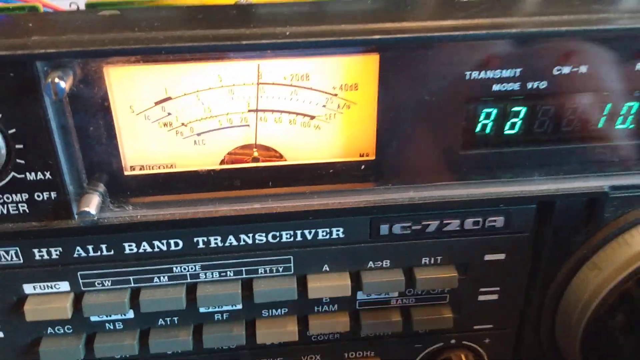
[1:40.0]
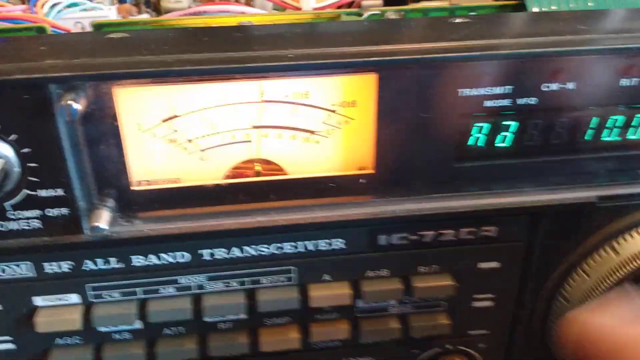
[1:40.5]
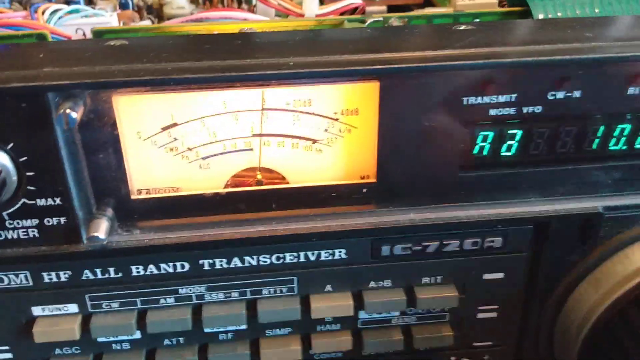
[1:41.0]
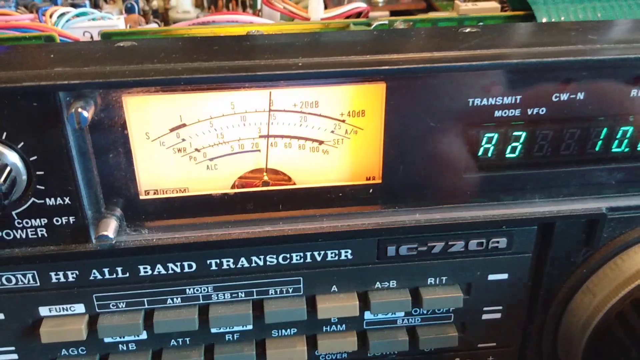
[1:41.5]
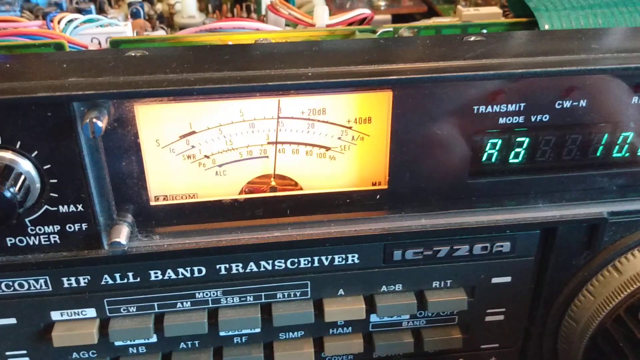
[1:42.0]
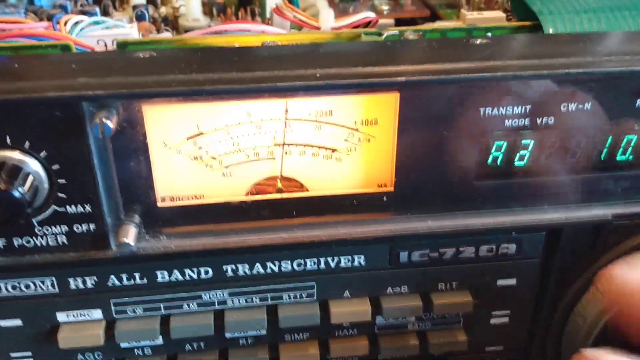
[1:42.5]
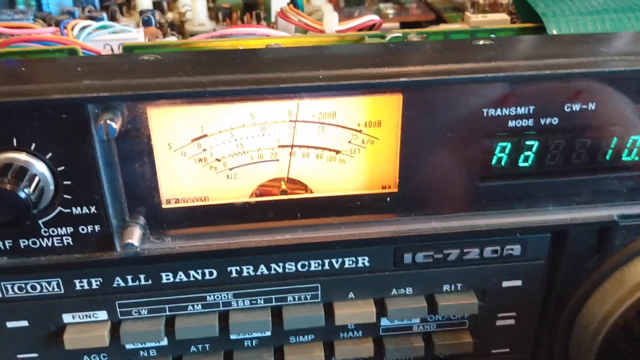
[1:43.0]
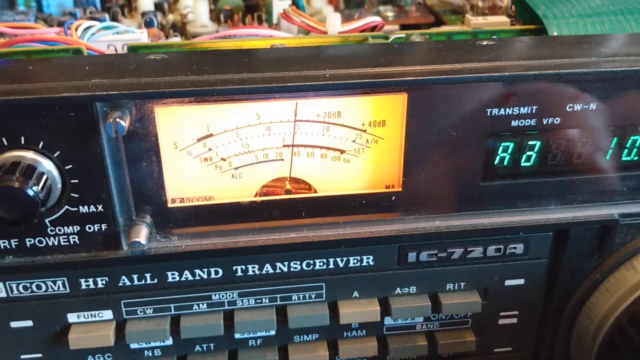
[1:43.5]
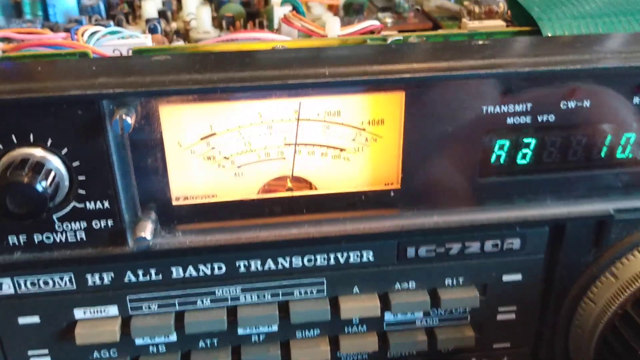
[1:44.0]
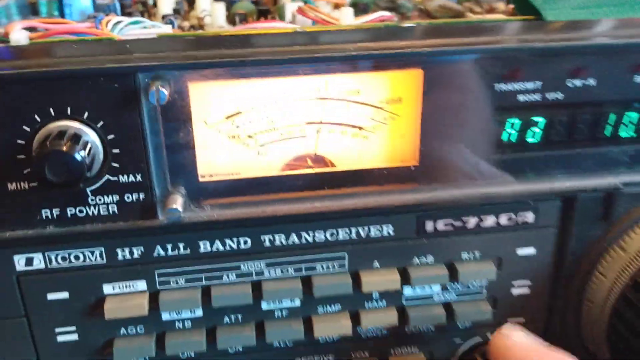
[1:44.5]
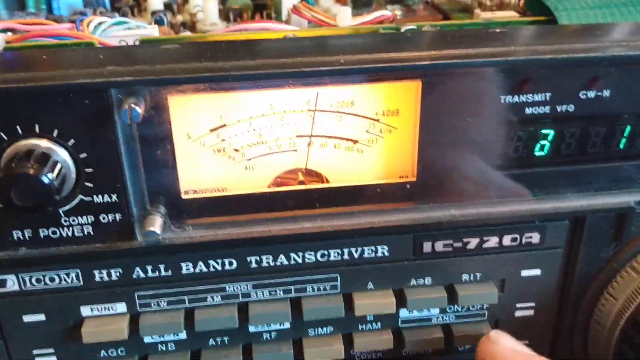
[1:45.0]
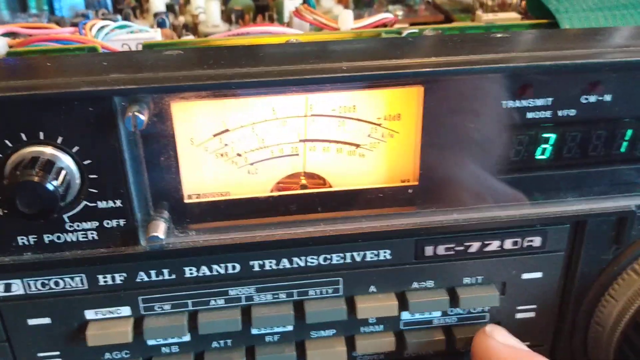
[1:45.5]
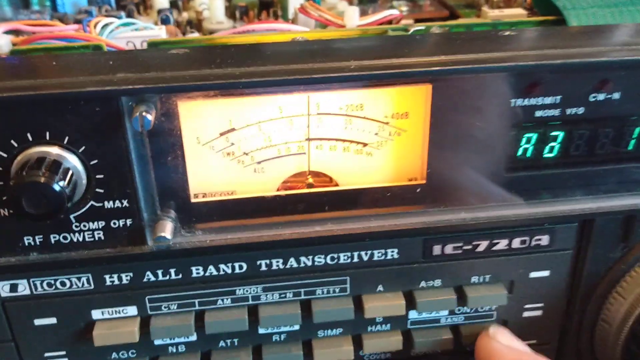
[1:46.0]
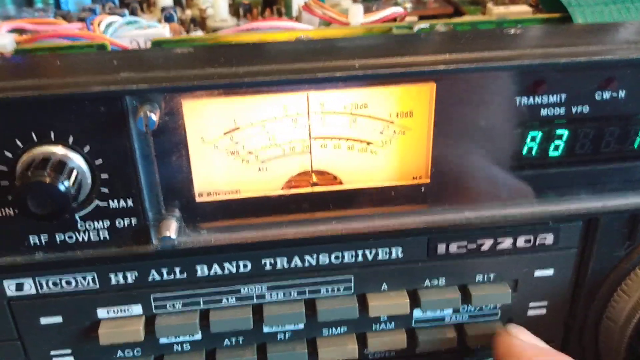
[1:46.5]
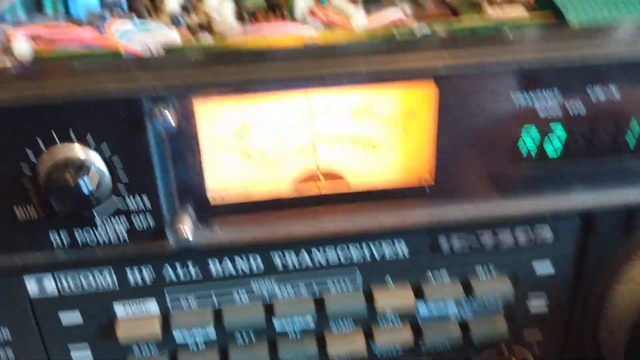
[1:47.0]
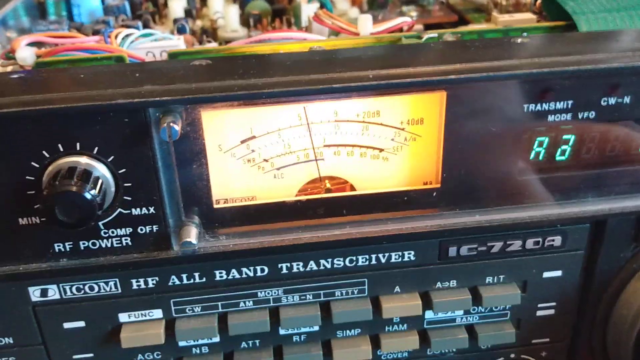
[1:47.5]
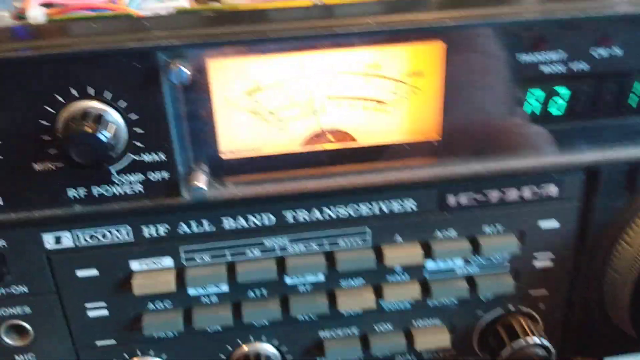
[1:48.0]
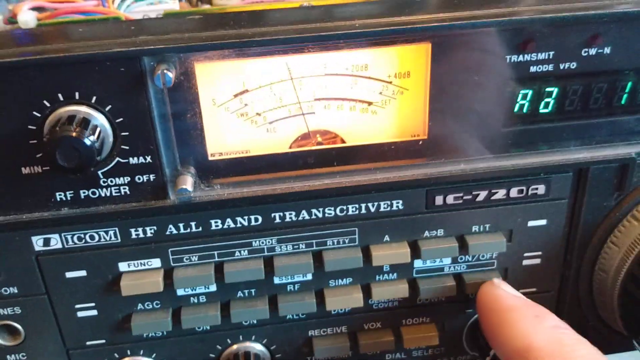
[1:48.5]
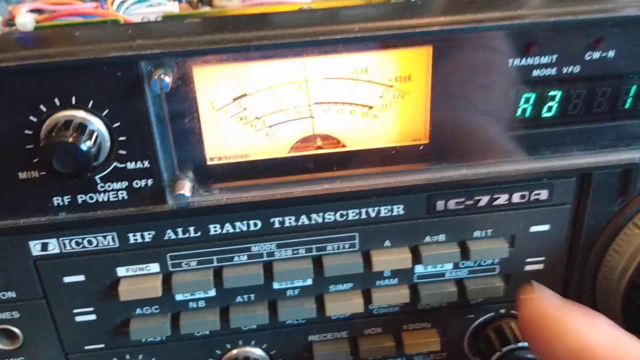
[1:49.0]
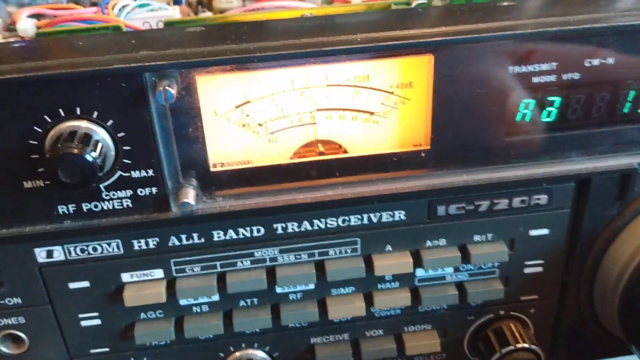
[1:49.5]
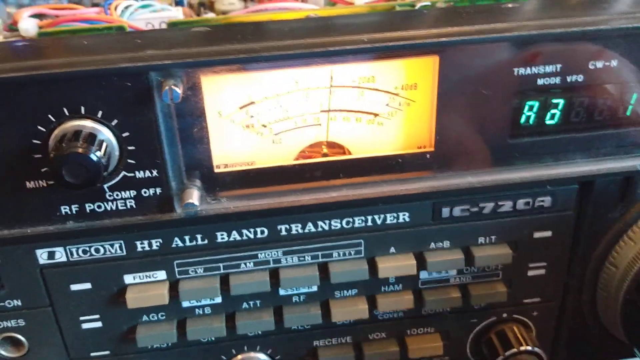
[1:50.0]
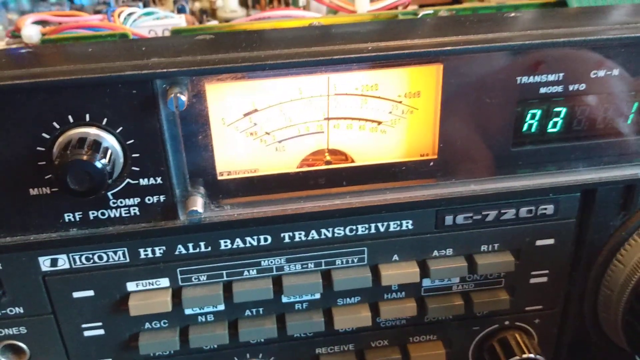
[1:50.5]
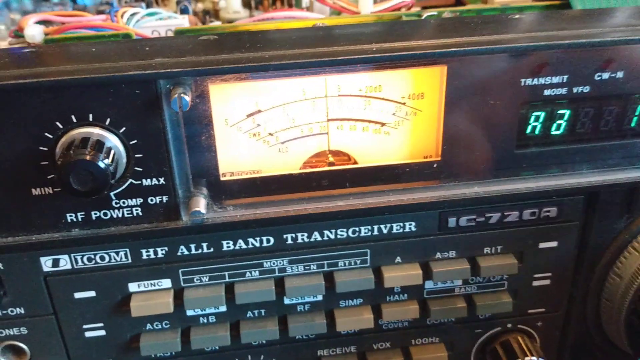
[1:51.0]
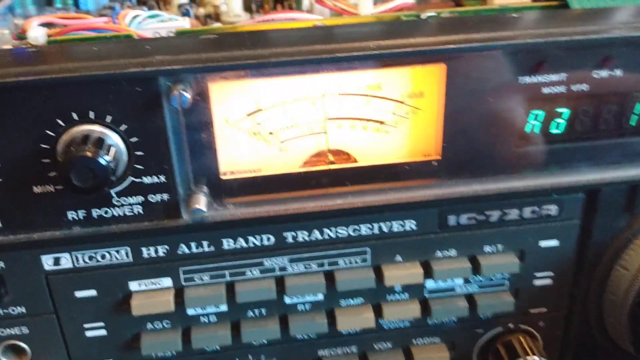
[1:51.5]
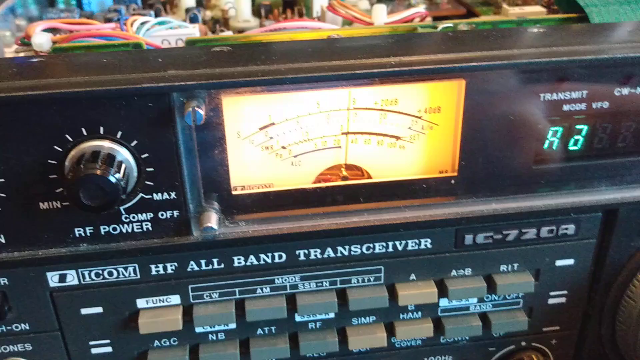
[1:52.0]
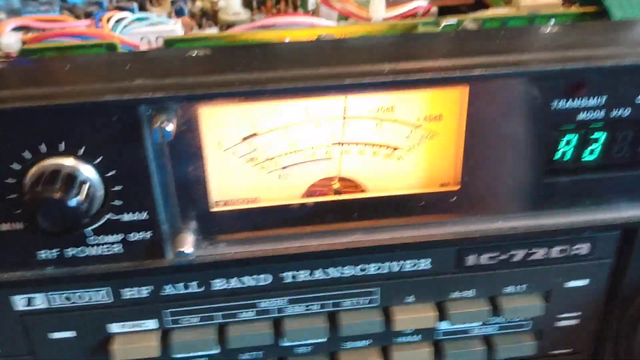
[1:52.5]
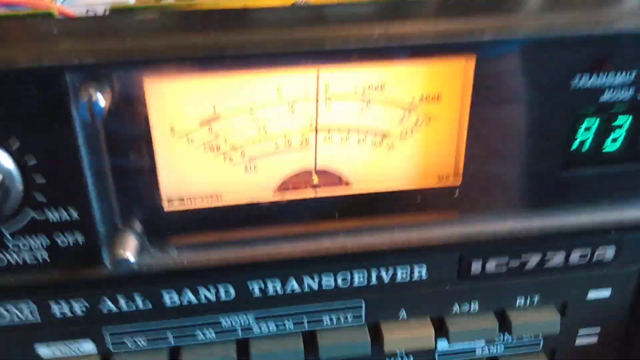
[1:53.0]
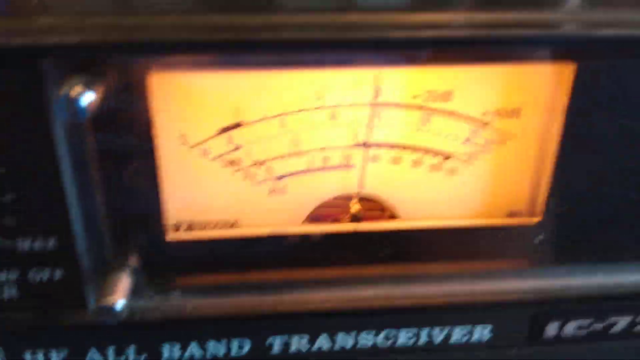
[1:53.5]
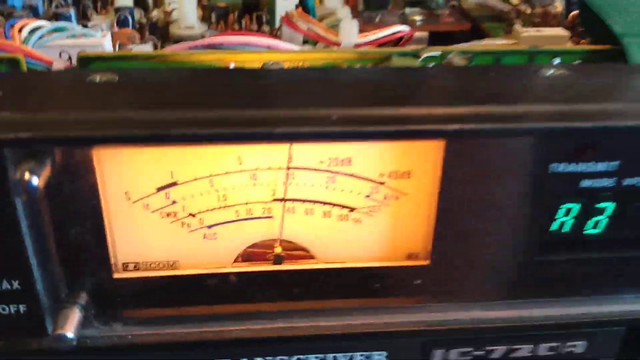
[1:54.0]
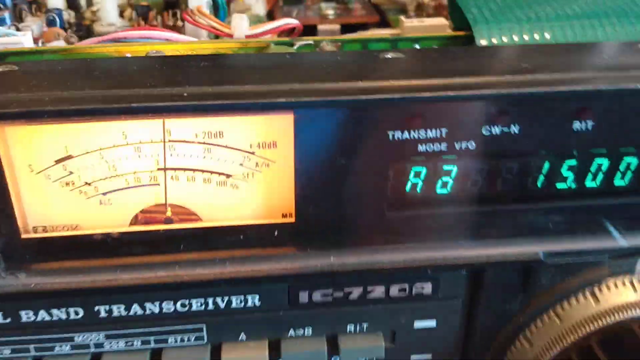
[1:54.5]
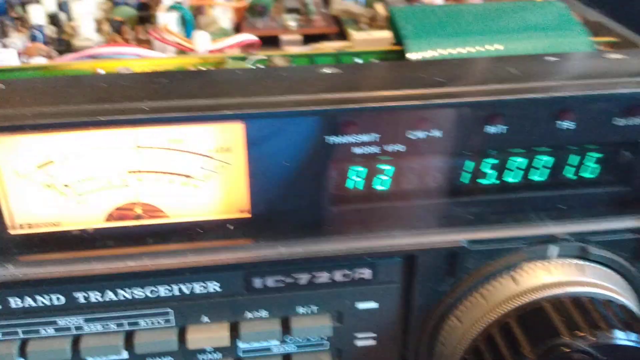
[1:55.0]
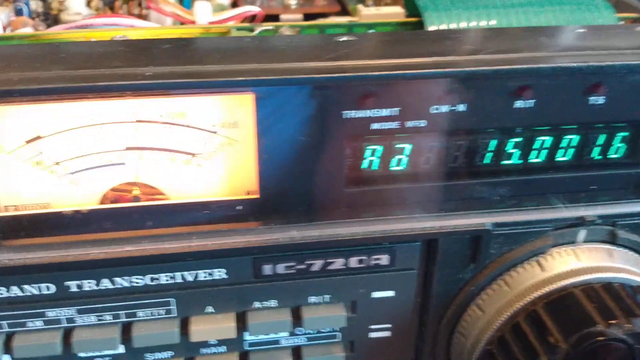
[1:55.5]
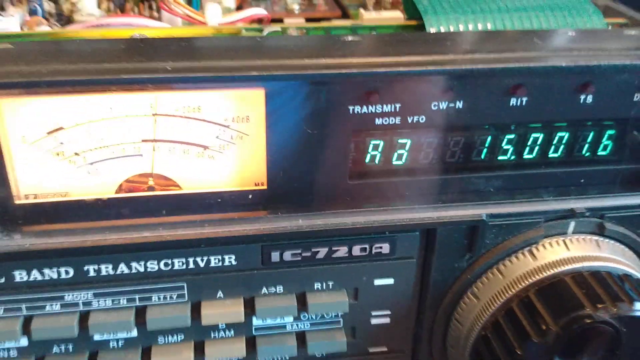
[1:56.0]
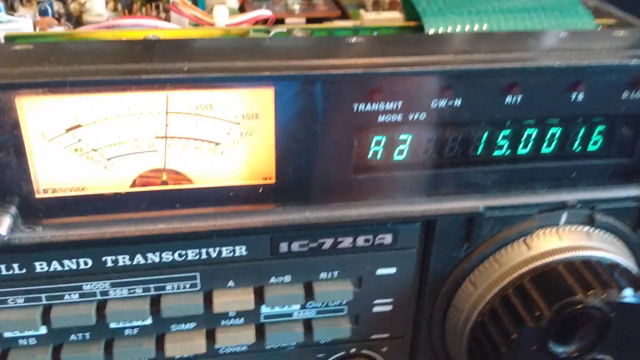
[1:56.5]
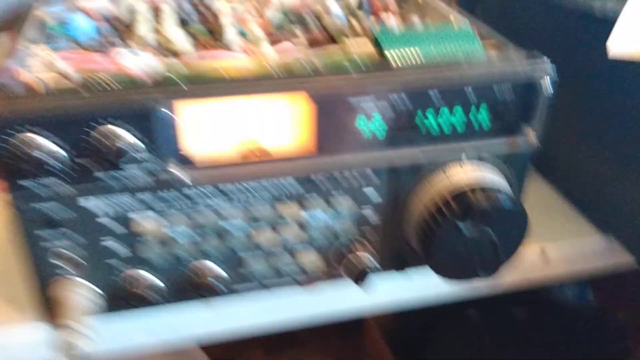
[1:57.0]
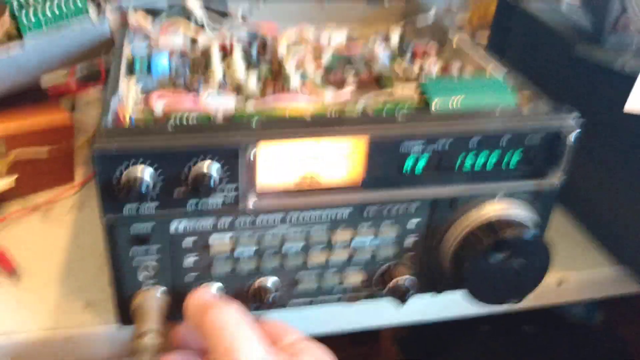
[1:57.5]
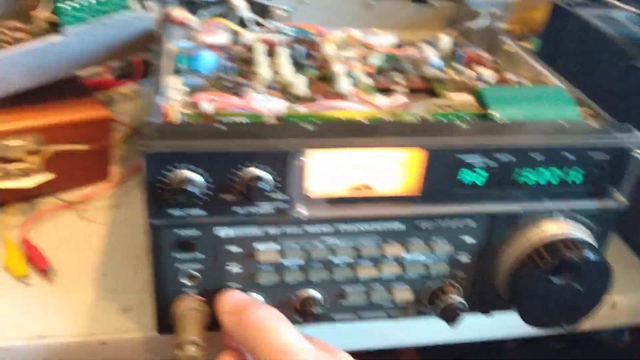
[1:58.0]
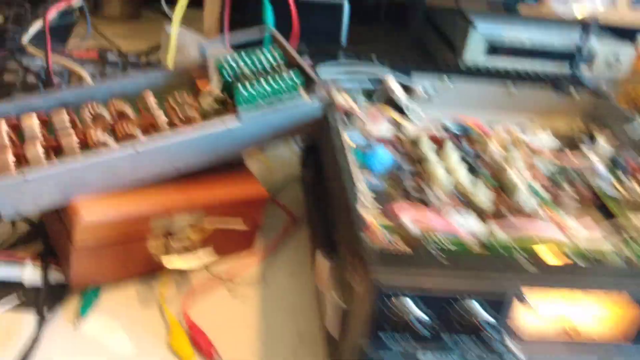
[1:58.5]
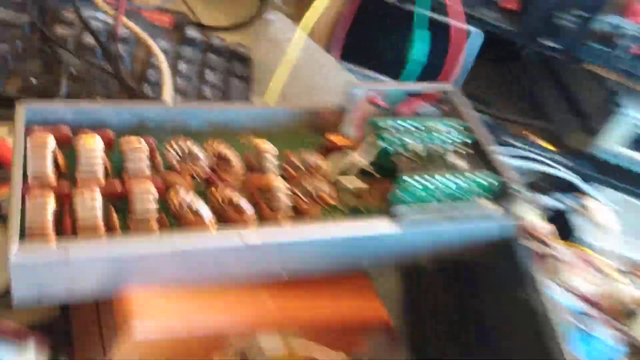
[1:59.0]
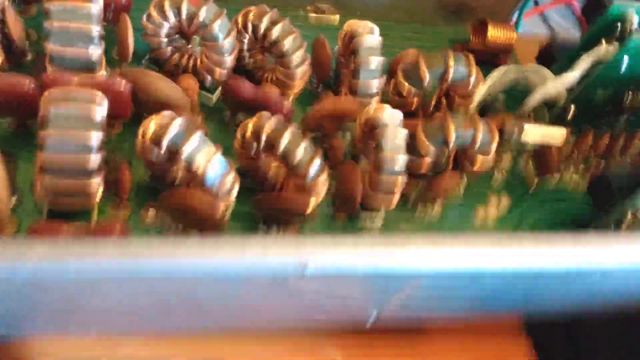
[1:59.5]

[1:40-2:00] The hand spins the larger knob on the right. A layer of glass covers the digital display, as the reflection of the person's hand shows in it while they grab the large knob, and their fingers are also just slightly in the frame. The hand has very thick, pudgy fingers and appears to turn the large knob to the left and right. The hand then points at some of the buttons and appears to push one in and out. The button is gray, rectangular and labeled "Band", and the person points at it with their index finger and pushes it in and out. A knob to the left of the needle display reads "RF power".